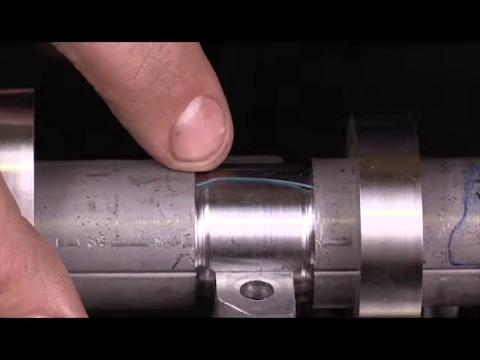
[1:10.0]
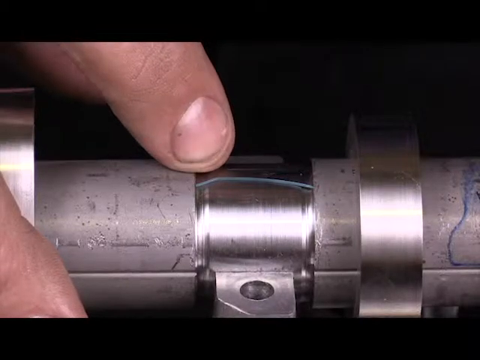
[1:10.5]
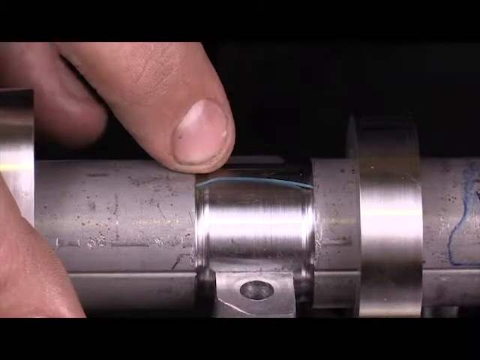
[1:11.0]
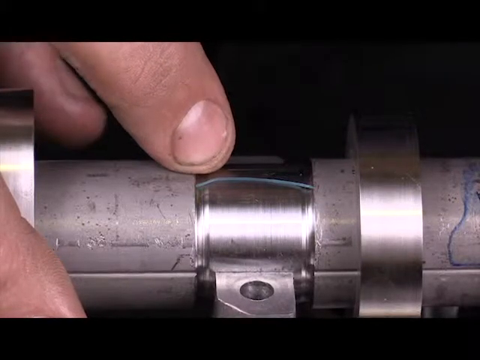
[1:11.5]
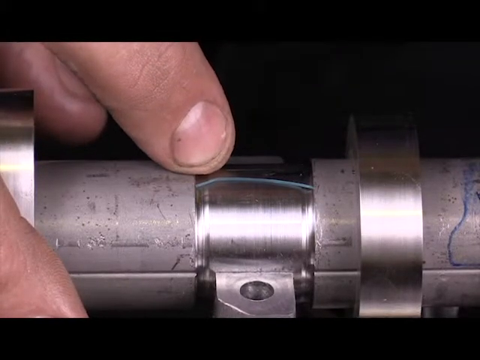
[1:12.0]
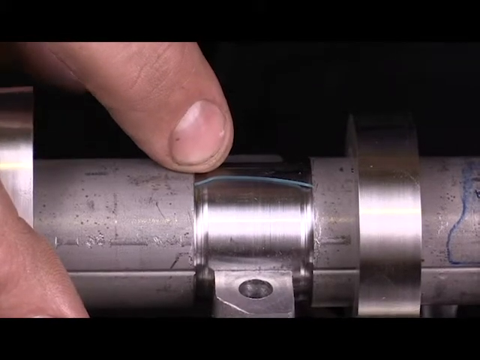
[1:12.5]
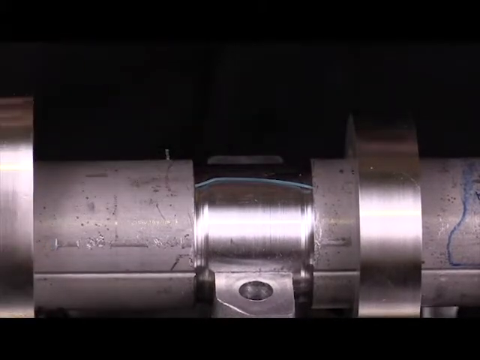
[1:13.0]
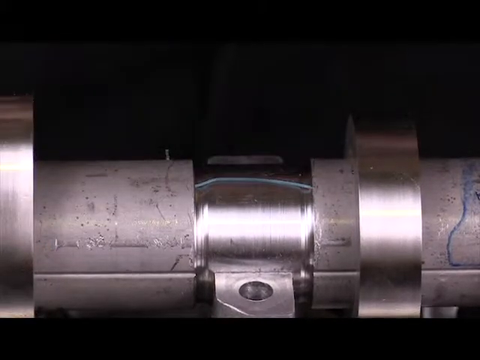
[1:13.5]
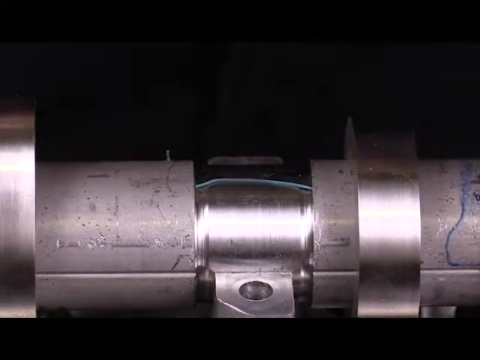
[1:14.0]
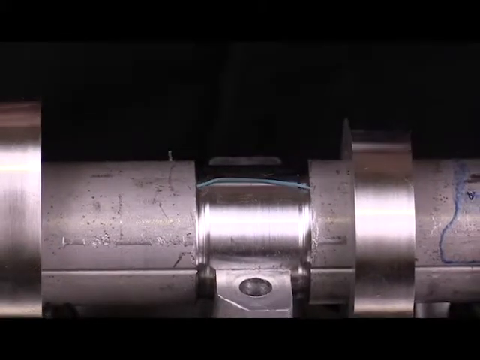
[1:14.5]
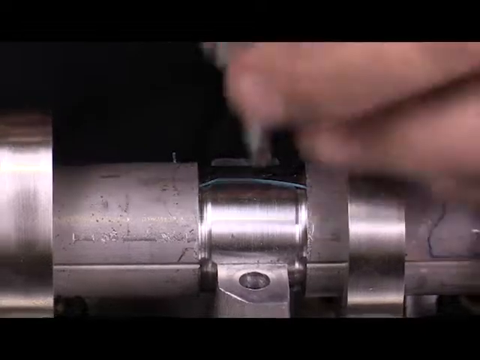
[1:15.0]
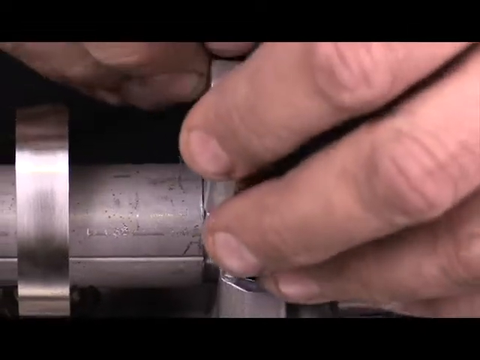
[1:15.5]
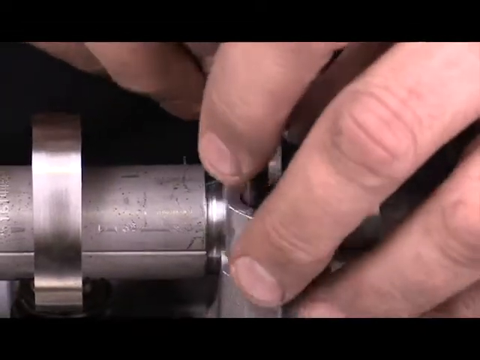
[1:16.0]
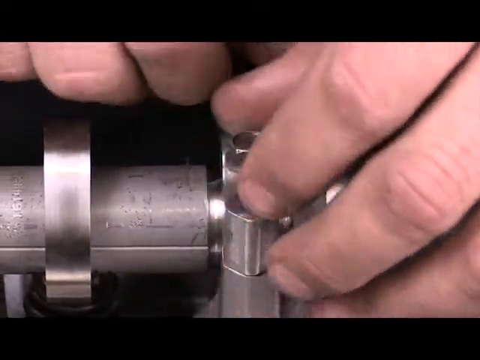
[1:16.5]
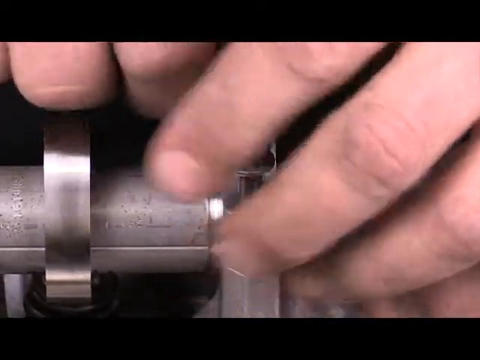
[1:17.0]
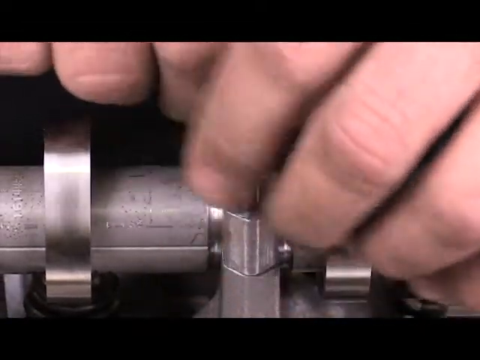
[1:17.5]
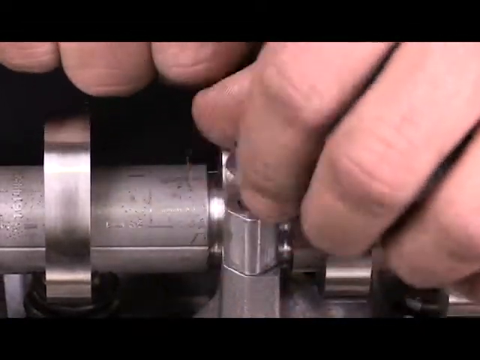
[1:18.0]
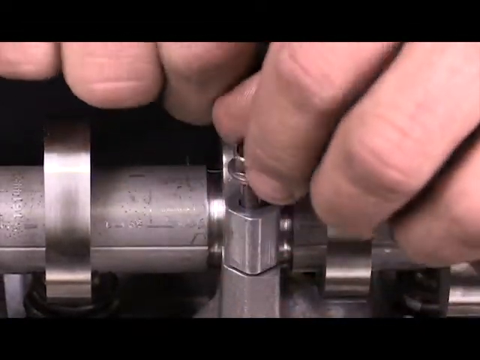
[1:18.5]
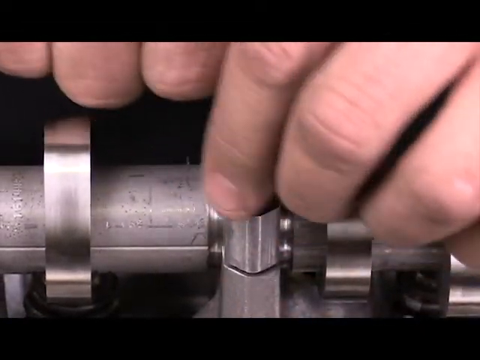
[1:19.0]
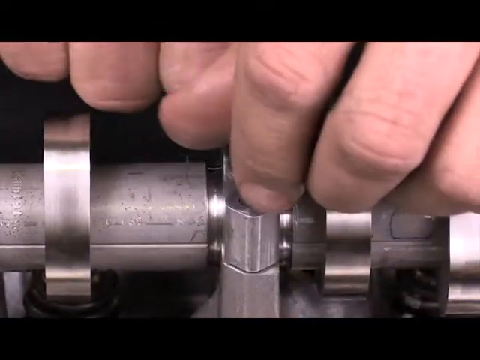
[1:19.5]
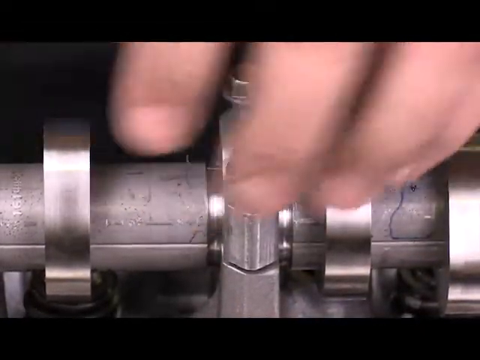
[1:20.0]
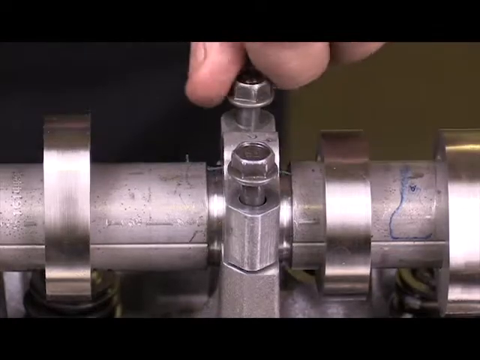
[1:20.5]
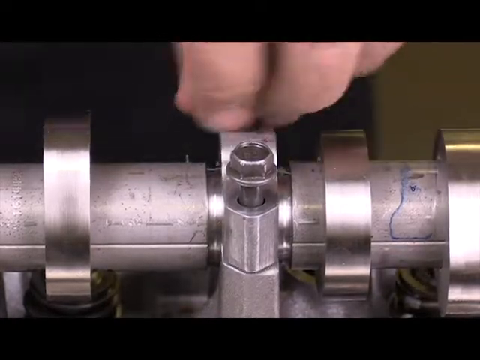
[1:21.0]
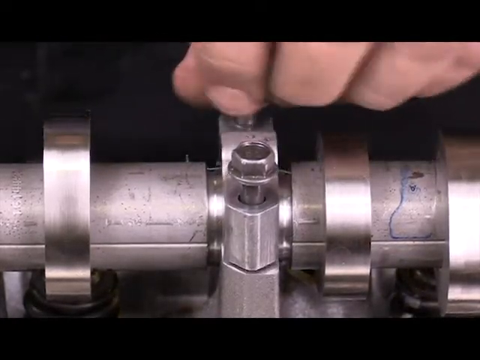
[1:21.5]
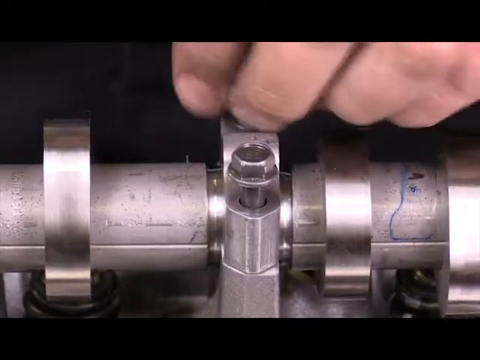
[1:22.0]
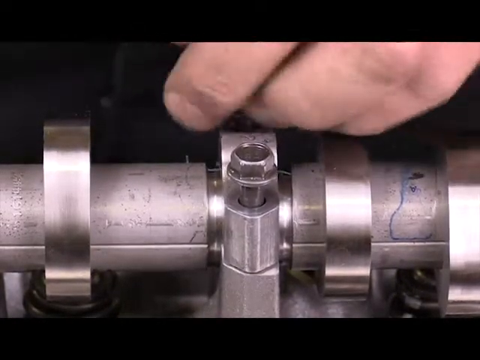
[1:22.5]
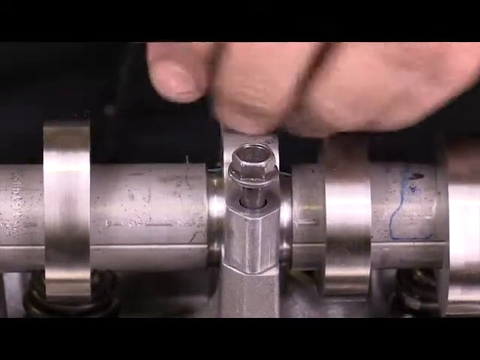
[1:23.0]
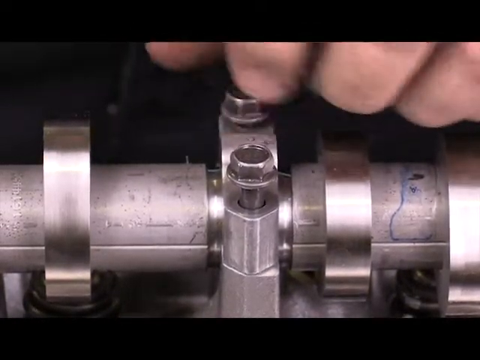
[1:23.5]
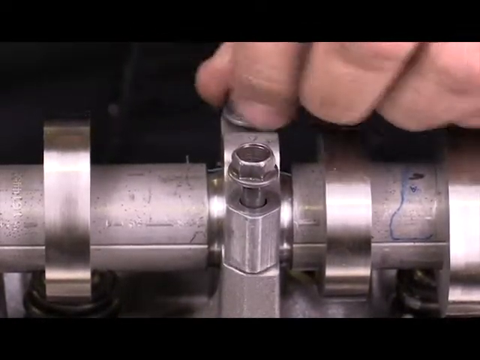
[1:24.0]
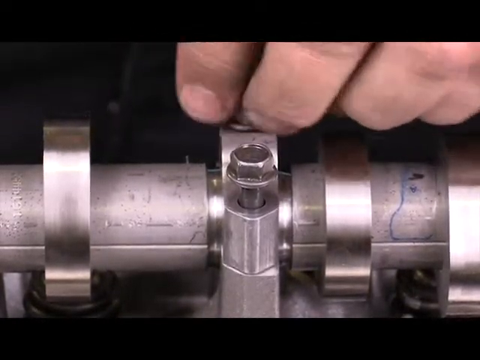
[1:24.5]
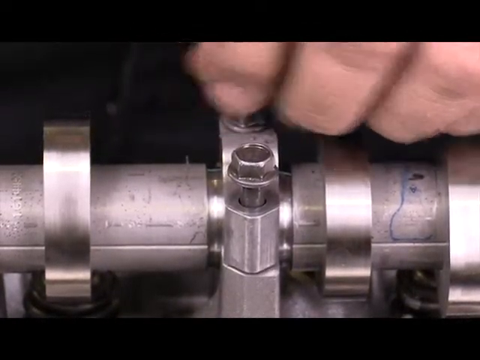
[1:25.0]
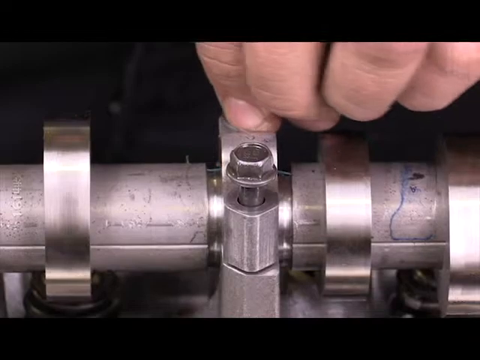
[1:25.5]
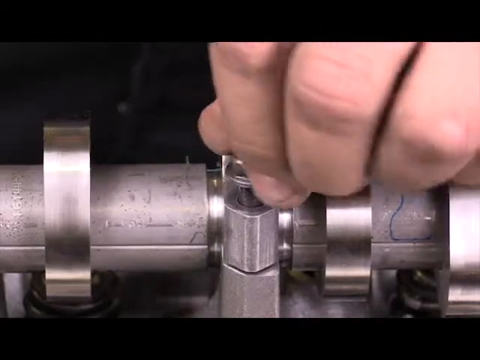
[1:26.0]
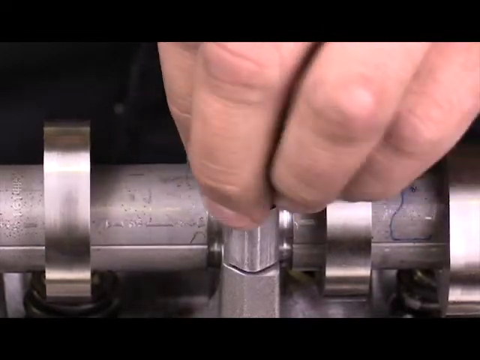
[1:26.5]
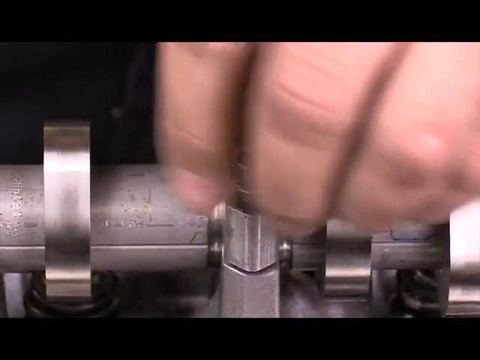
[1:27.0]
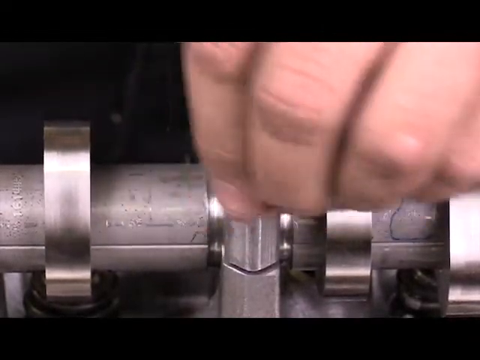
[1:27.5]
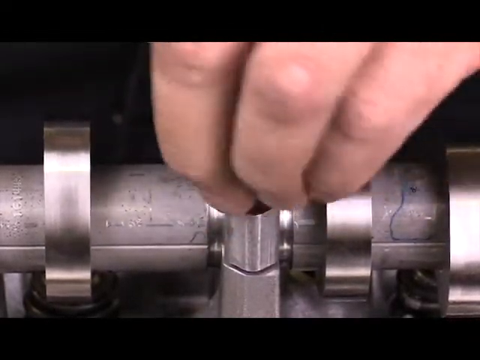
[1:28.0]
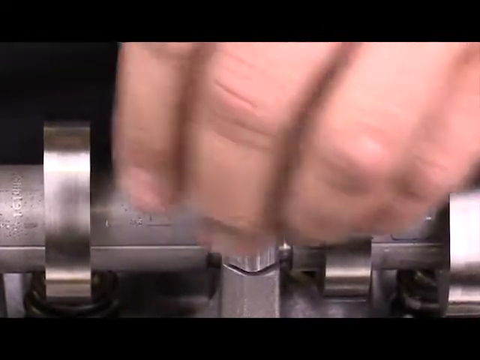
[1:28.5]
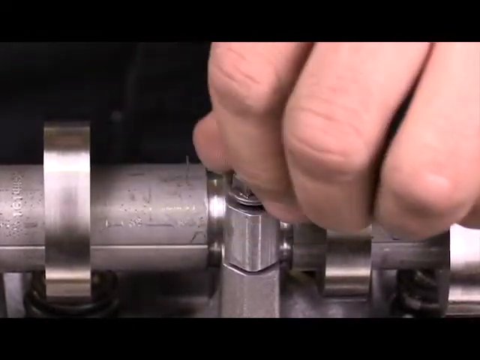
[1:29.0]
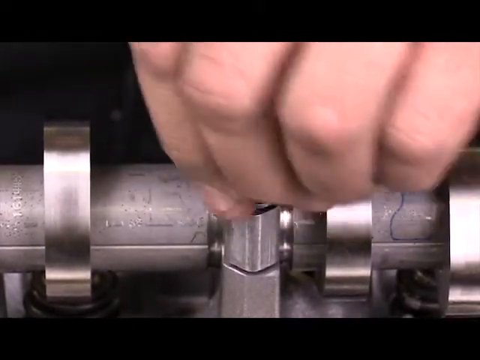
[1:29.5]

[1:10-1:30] A cylinder-shaped piece of metal, probably about 6 inches long, is touched by a white male finger. The finger disappears out of the frame for a moment, then knuckles and fingers appear as the hand comes back into the frame grasping a little piece of metal. Fingers on two hands flick as though turning, and a little screw gets turned. Then one hand moves away, and the remaining hand uses its fingers to turn the other little screw. There are two bolts on this metal piece, and the hand appears to be tightening them, having brought the piece in, put it onto the cylinder and tightened the screws on top. The shot is very zoomed in, showing little besides the fingers and the metal.